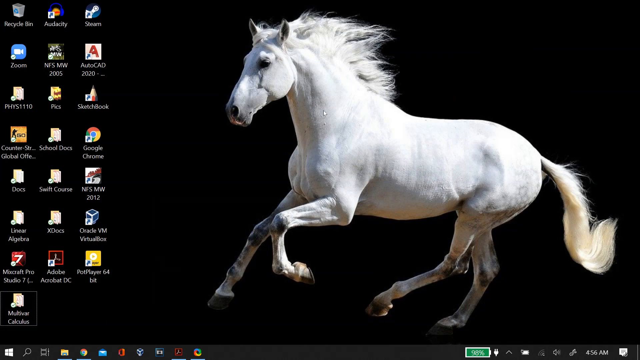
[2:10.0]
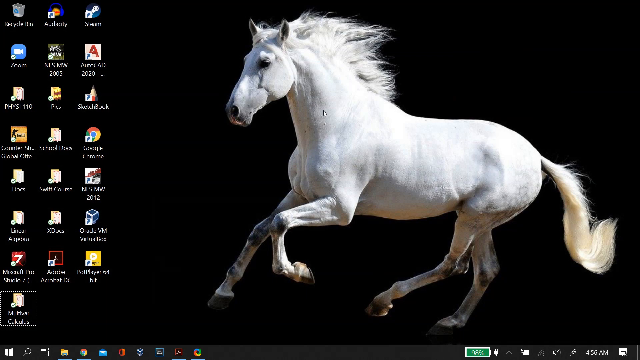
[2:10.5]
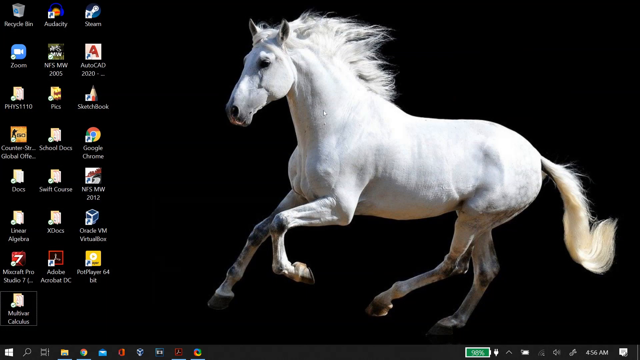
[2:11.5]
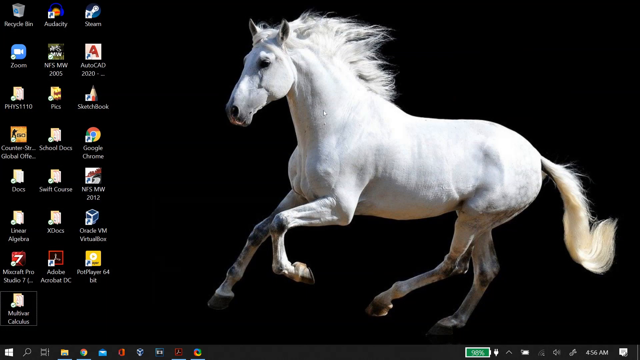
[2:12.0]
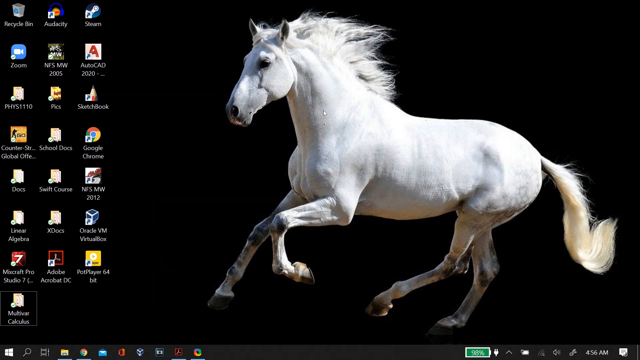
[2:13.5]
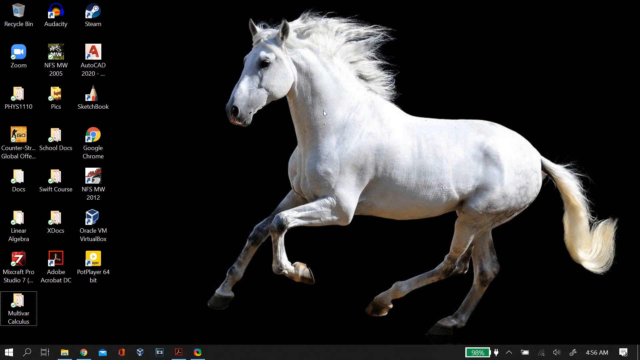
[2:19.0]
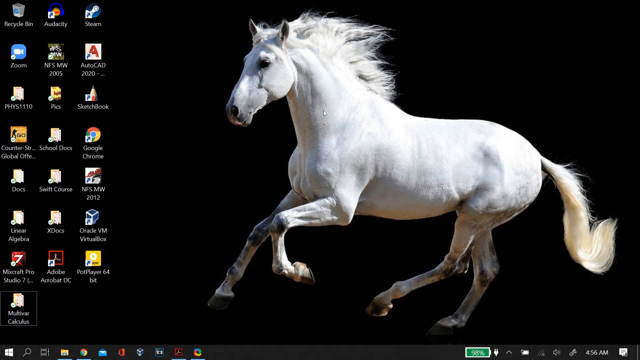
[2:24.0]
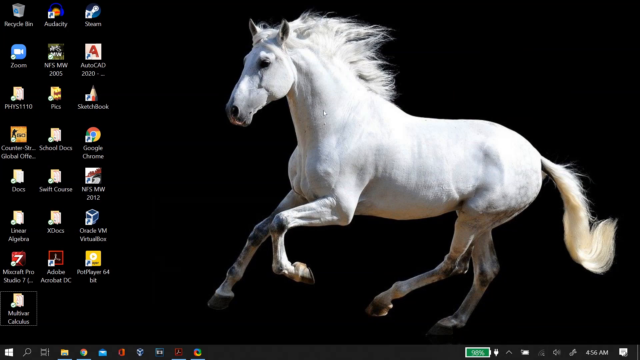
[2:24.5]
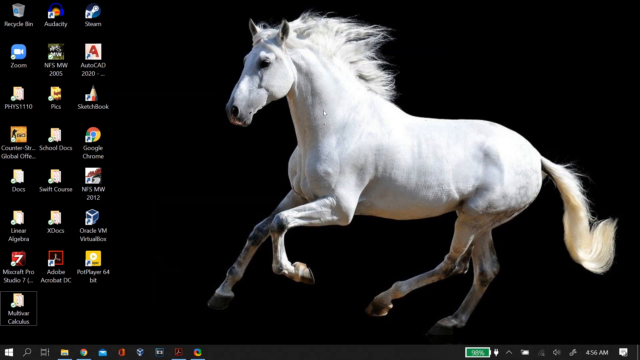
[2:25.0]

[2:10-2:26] The user's desktop is shown again: an all-black background with a white horse in the center. Nothing is being done on screen.